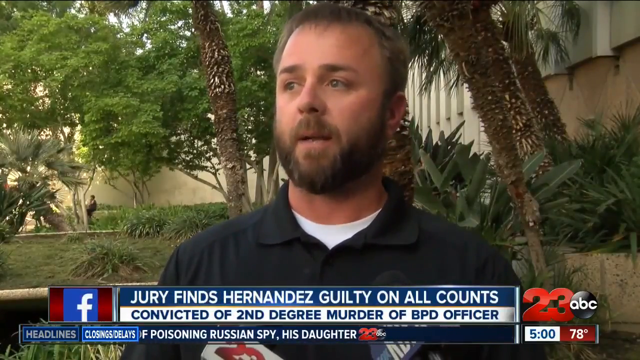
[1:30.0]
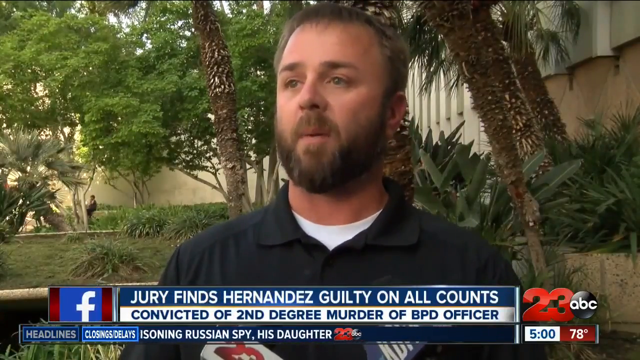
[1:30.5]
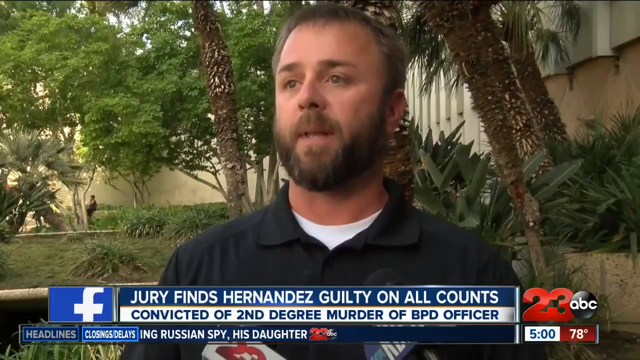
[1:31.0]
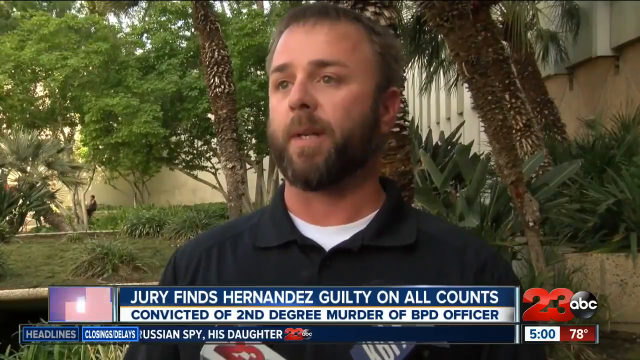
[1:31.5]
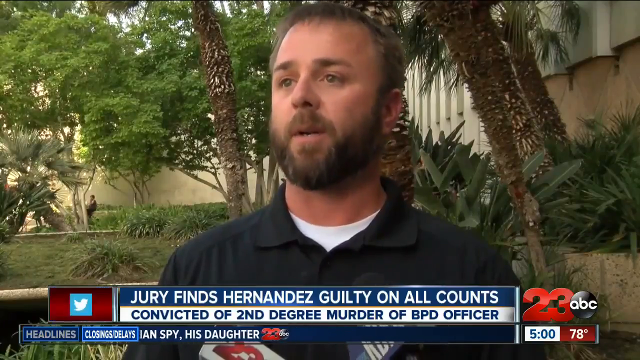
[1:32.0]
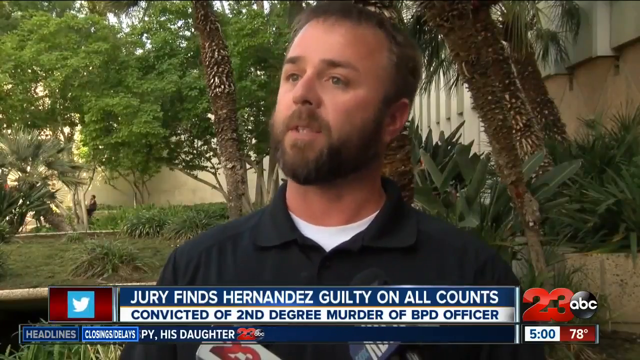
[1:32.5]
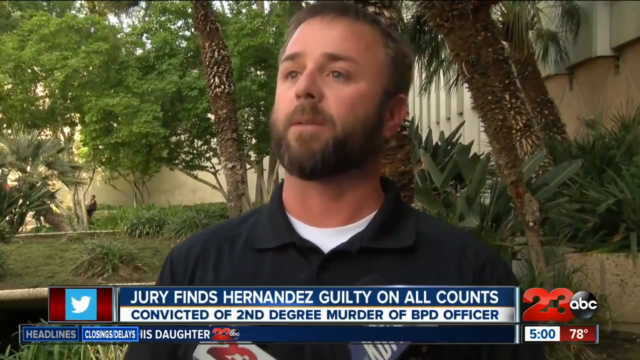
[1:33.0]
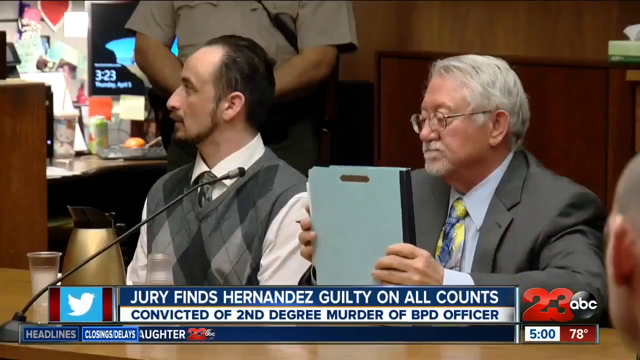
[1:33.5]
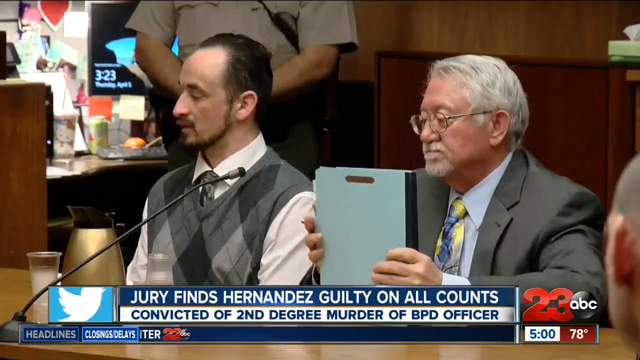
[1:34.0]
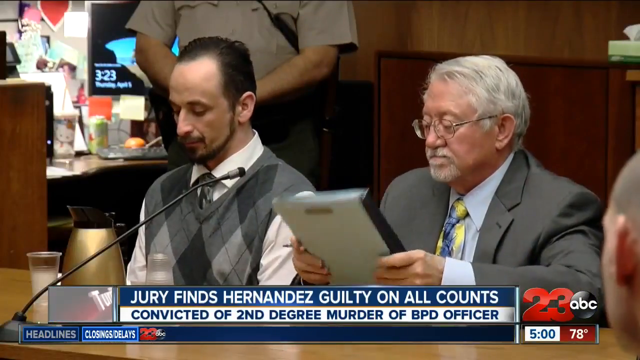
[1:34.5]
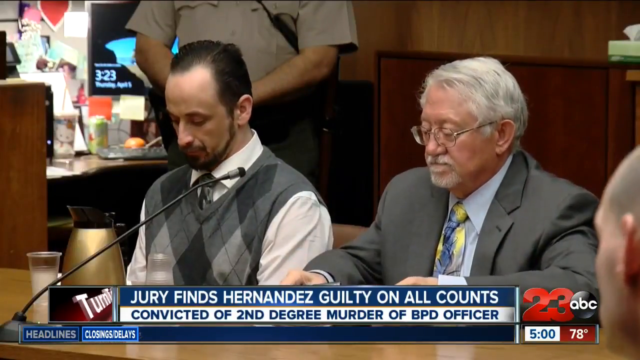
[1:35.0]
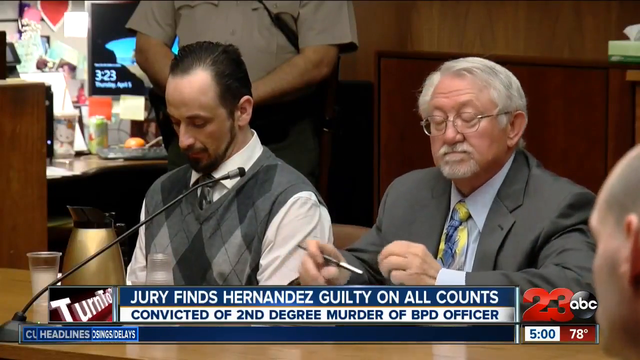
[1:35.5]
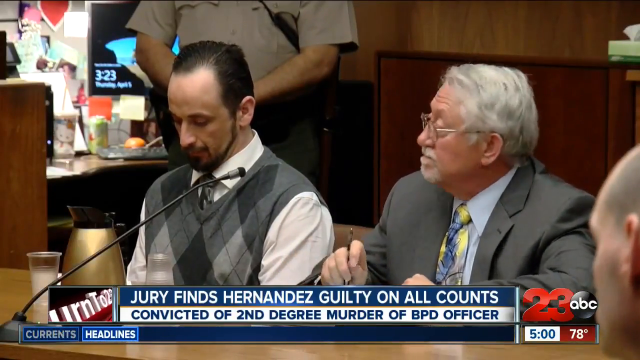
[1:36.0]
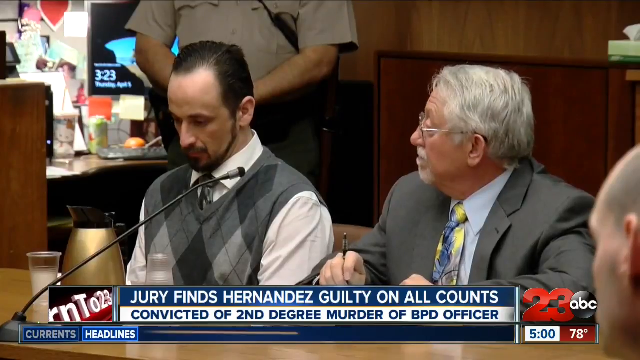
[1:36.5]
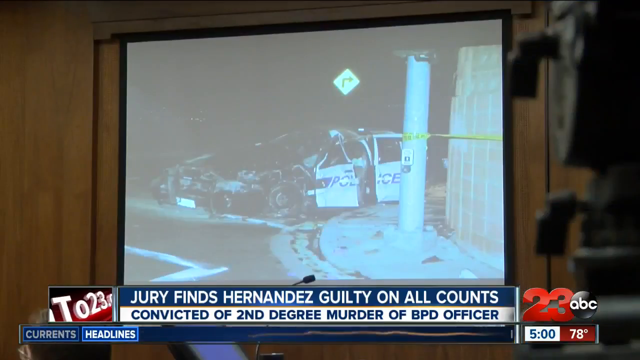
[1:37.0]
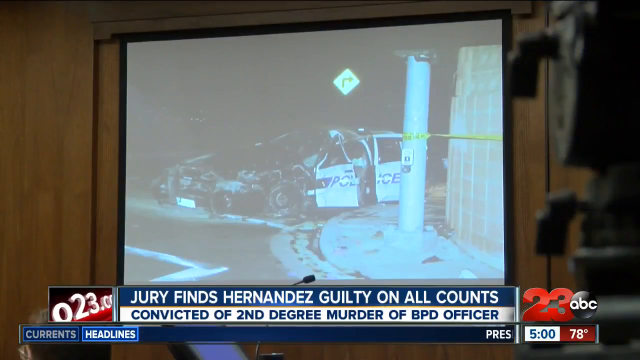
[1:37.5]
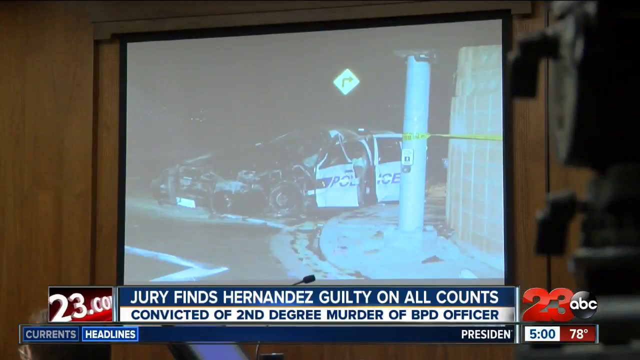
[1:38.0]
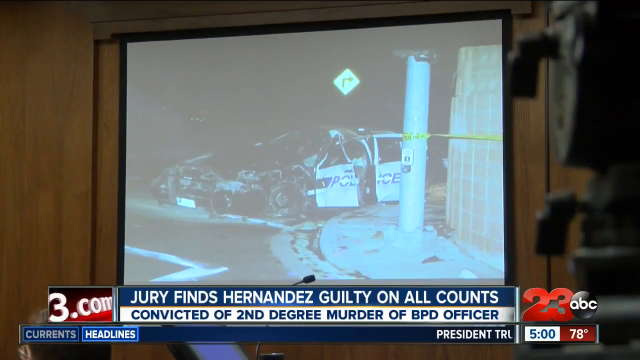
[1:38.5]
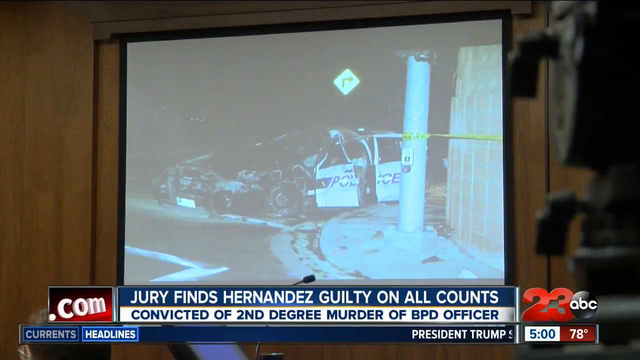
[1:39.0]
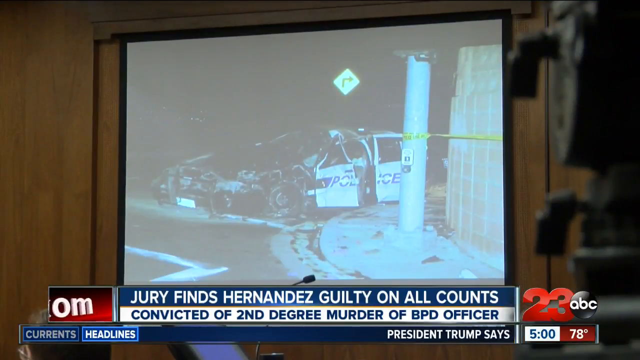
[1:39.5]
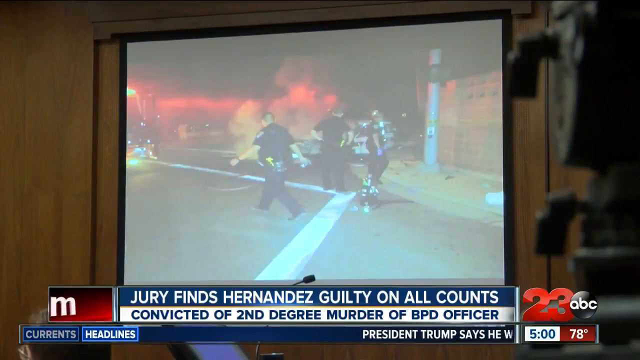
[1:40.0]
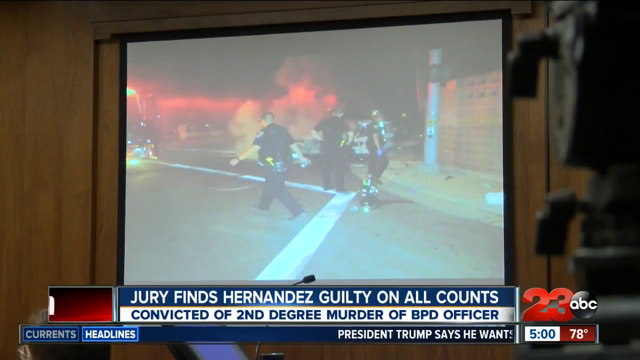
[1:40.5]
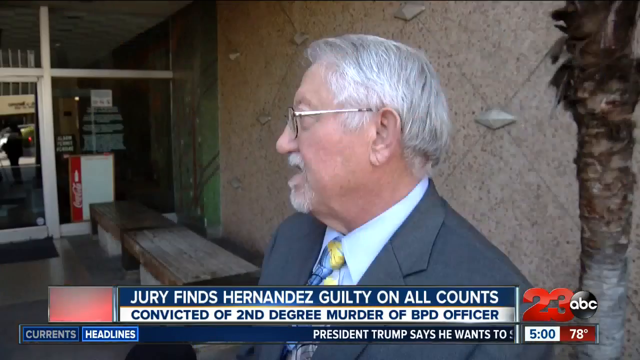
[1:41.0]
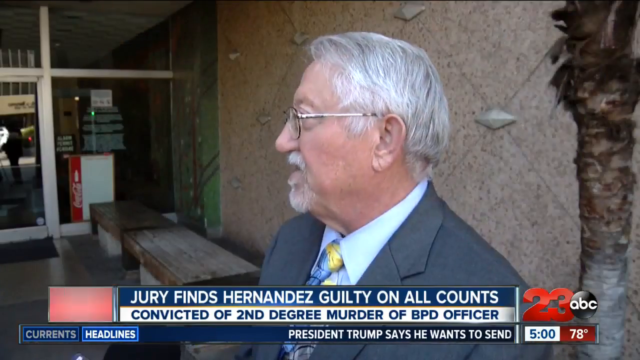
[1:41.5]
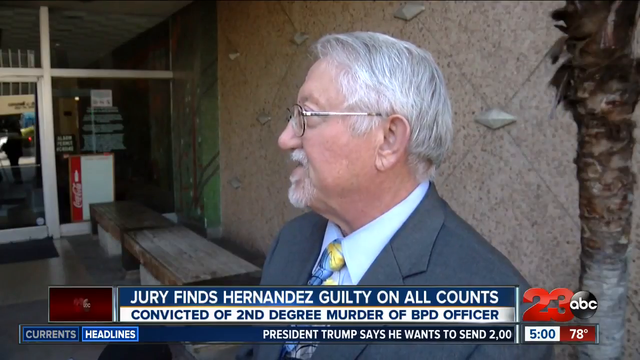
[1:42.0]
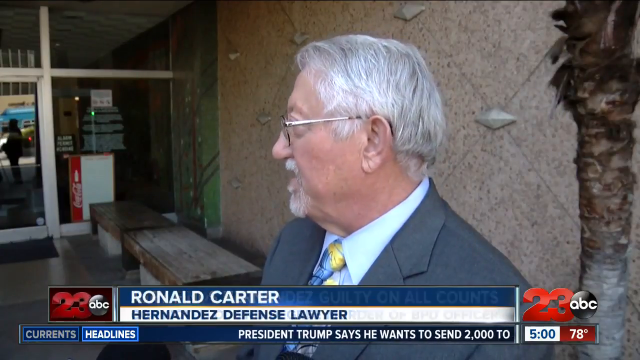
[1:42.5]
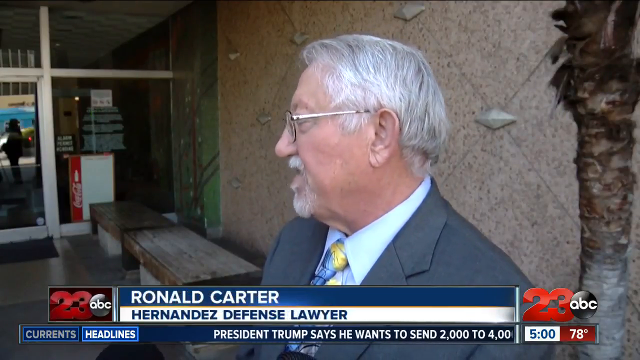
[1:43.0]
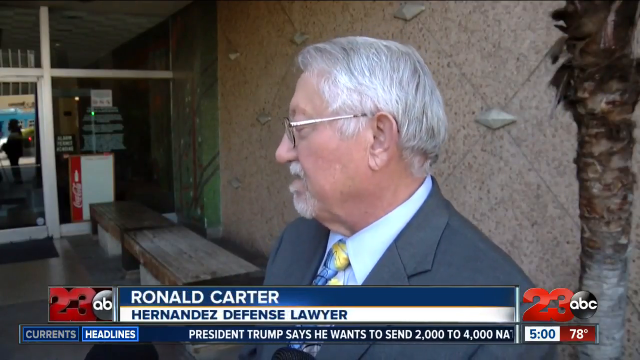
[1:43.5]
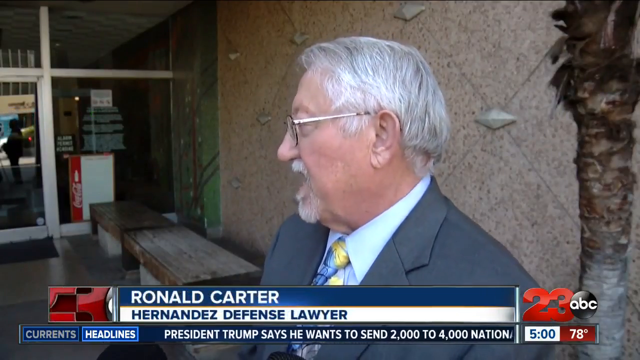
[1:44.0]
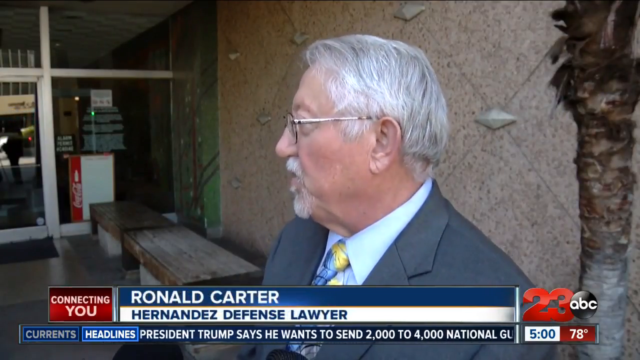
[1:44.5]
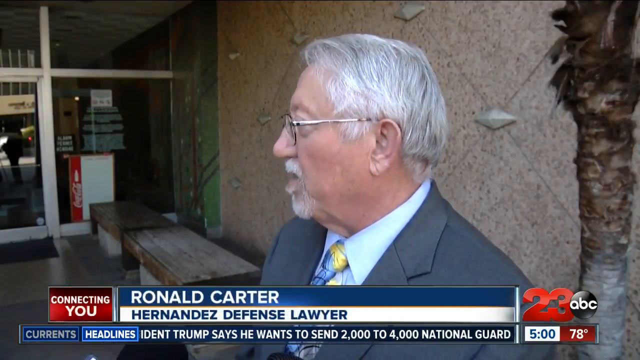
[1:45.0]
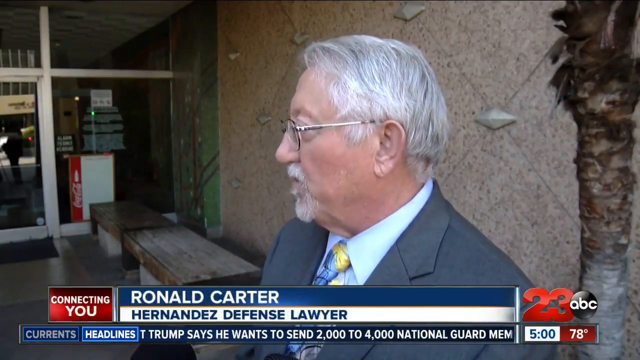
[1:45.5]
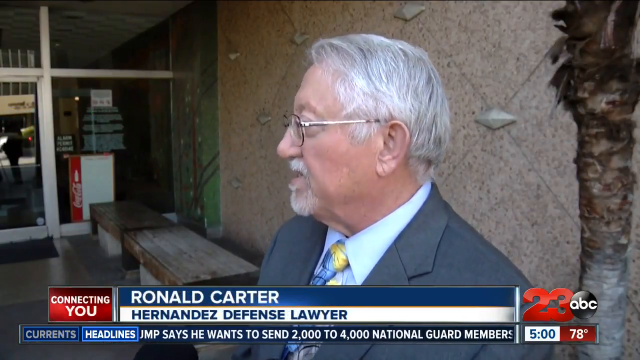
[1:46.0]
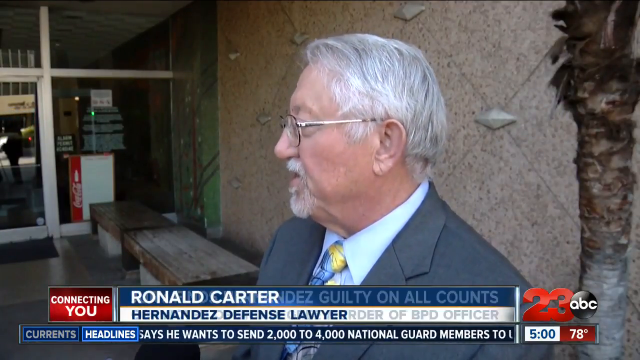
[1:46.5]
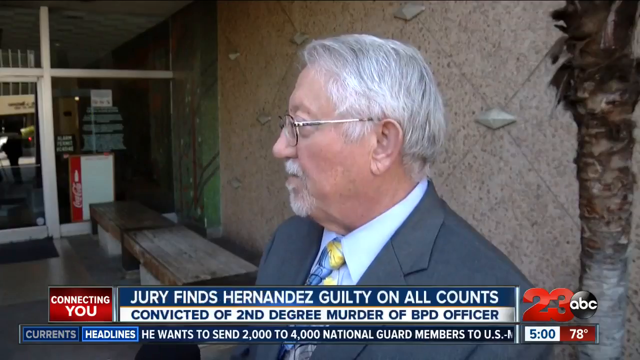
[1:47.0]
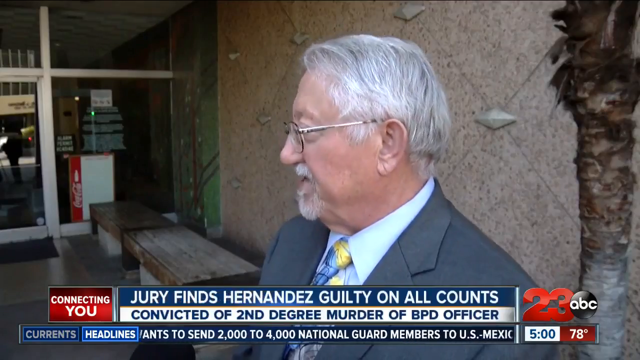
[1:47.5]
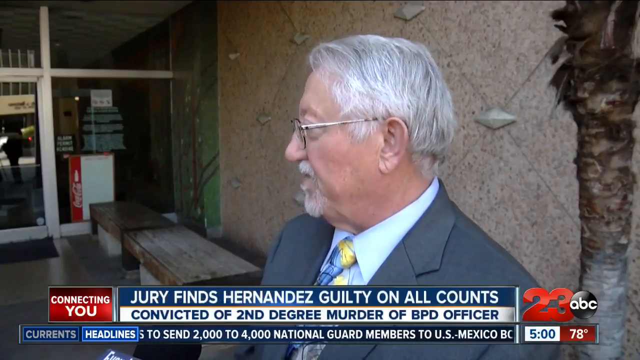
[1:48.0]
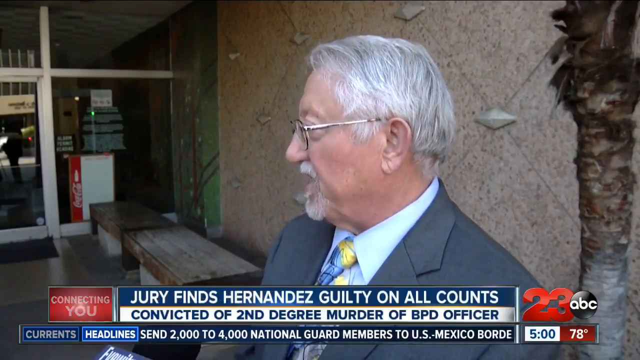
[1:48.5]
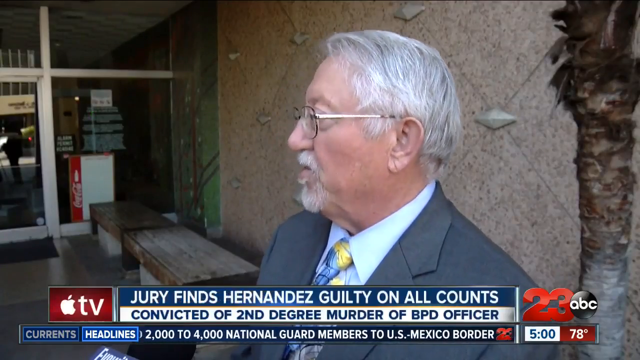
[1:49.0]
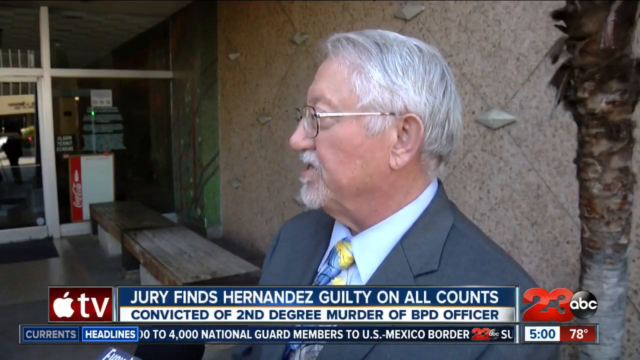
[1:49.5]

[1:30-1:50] The 23 ABC broadcast shows a picture of a police car that is utterly demolished, looking as if it was hit by a rocket launcher, though its door is still there. Another picture shows what look like firefighters, or maybe police, at a scene with smoke everywhere that looks like a wildfire. Hernandez's defense lawyer, Ronald Carter, then talks in an interview. Behind Hernandez, Hello Kitty is on a cup, and a 7 Up and an orange are on a desk in a small office area.